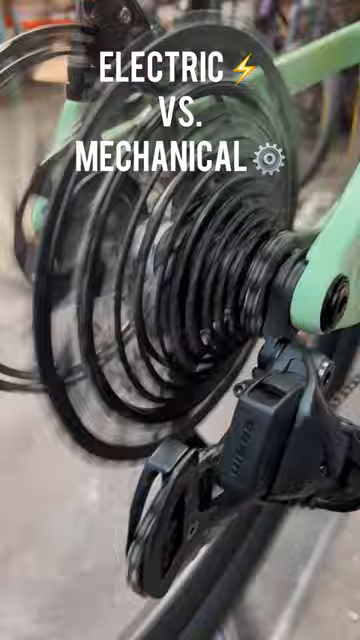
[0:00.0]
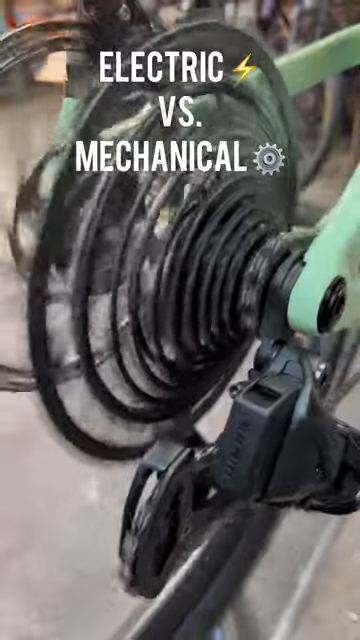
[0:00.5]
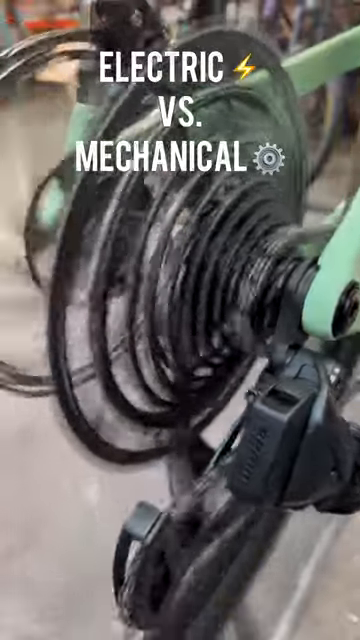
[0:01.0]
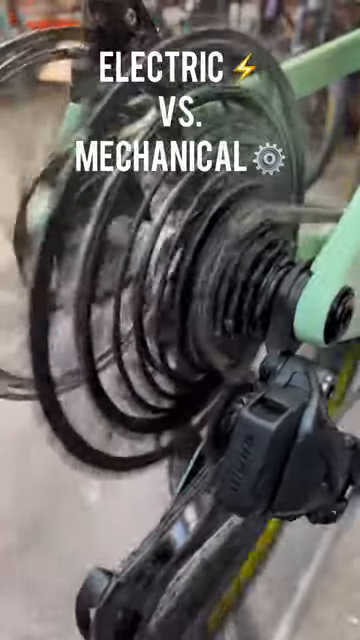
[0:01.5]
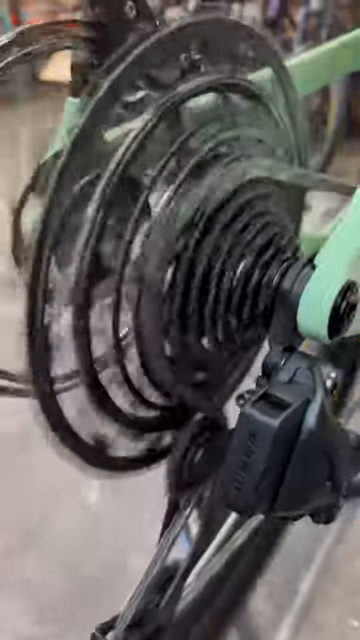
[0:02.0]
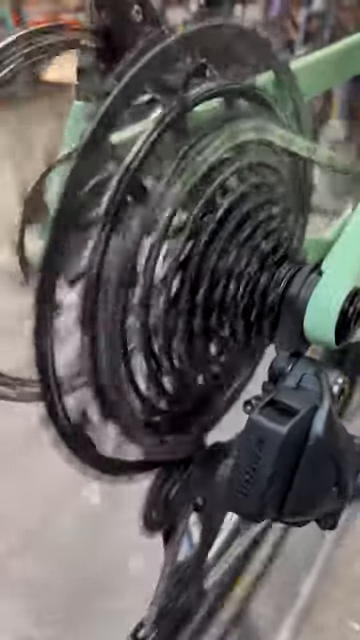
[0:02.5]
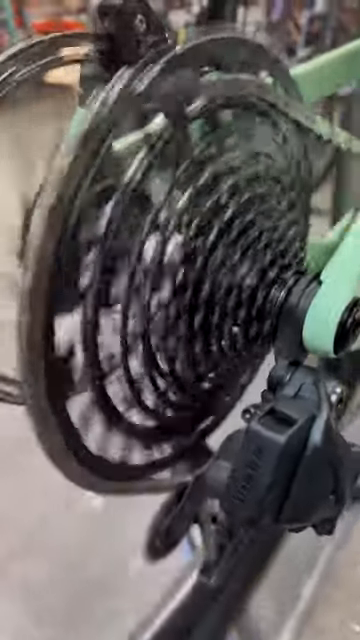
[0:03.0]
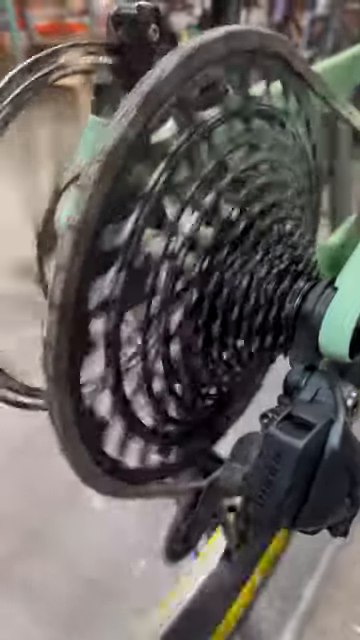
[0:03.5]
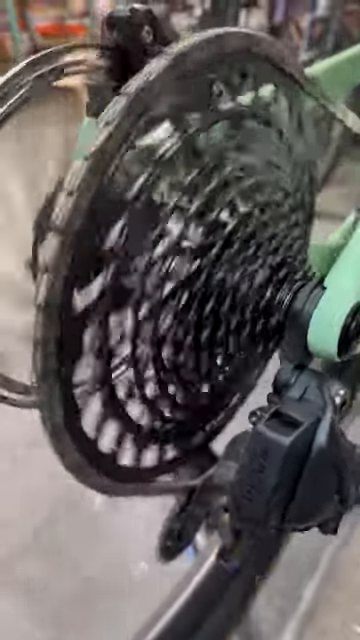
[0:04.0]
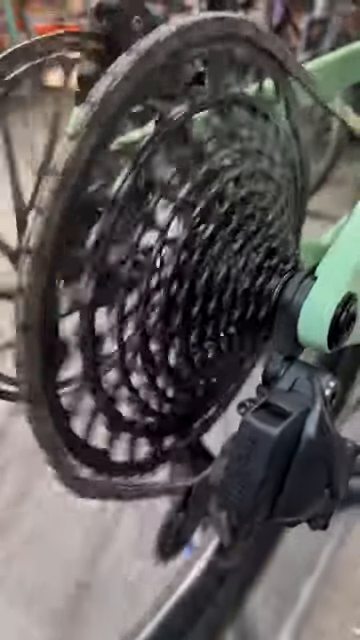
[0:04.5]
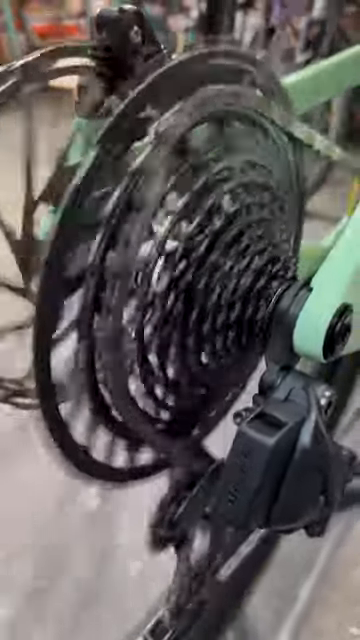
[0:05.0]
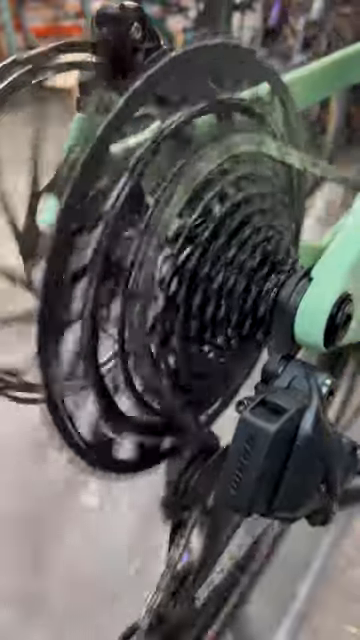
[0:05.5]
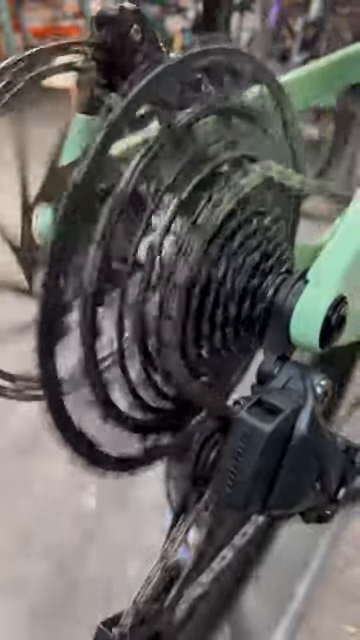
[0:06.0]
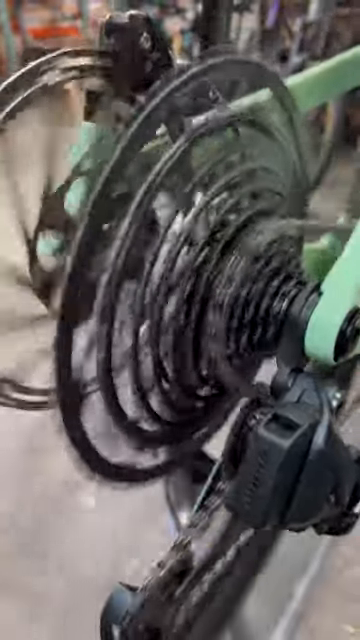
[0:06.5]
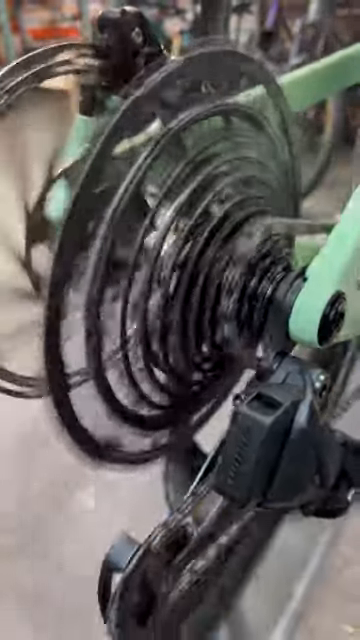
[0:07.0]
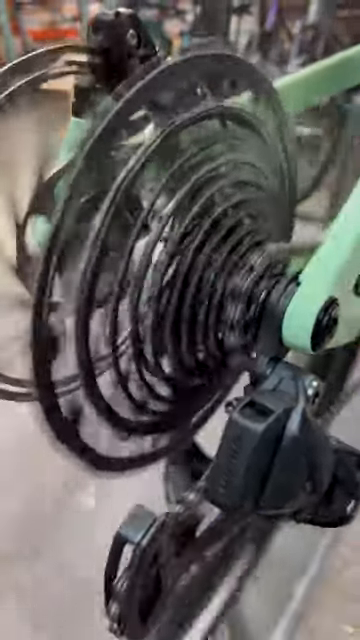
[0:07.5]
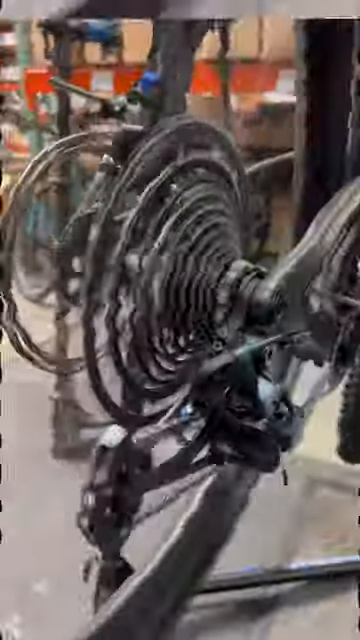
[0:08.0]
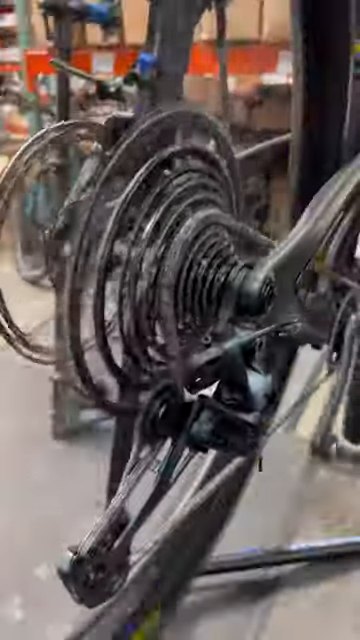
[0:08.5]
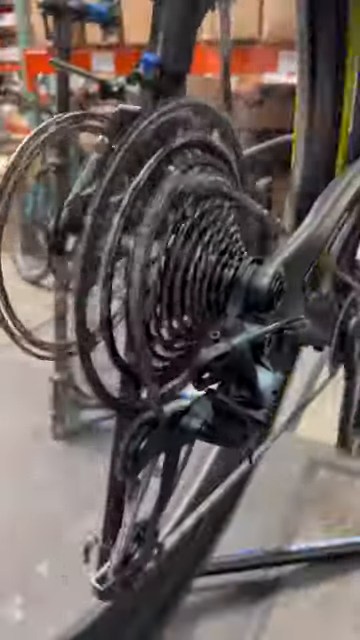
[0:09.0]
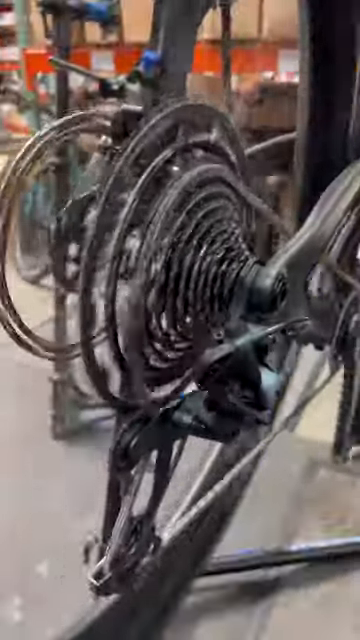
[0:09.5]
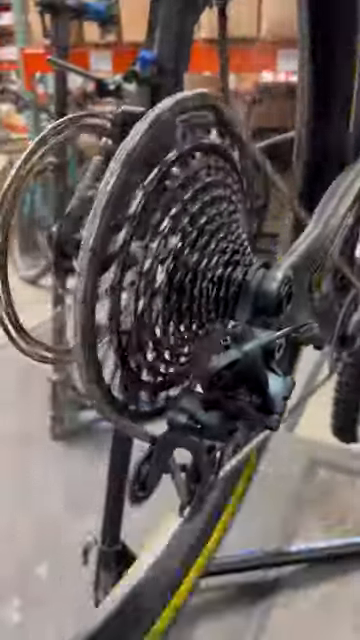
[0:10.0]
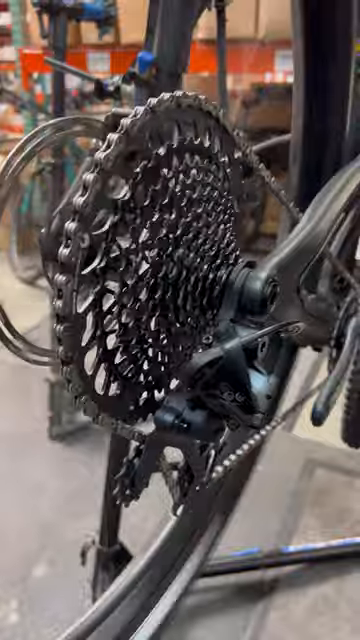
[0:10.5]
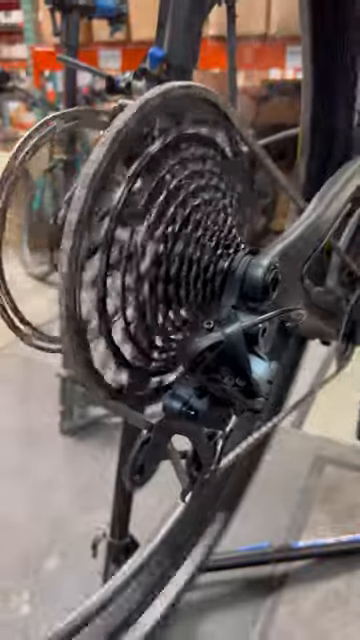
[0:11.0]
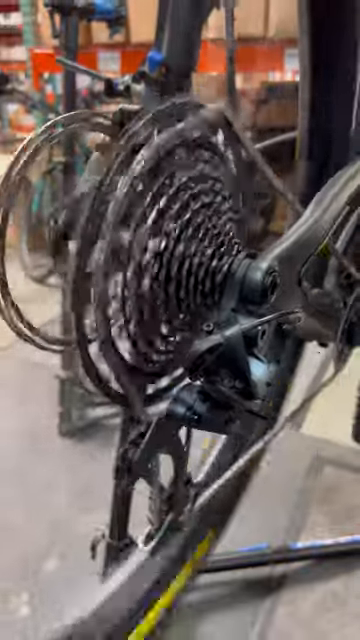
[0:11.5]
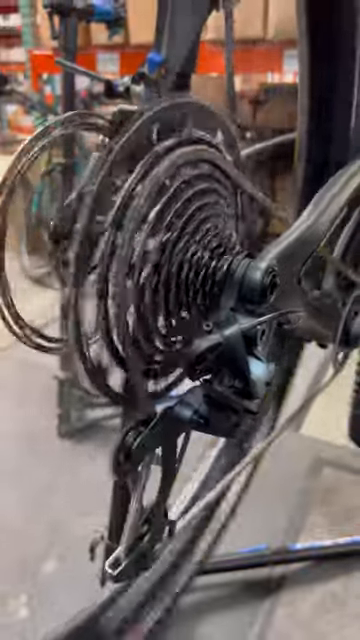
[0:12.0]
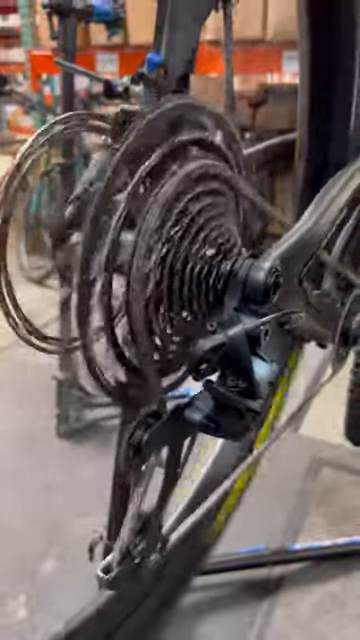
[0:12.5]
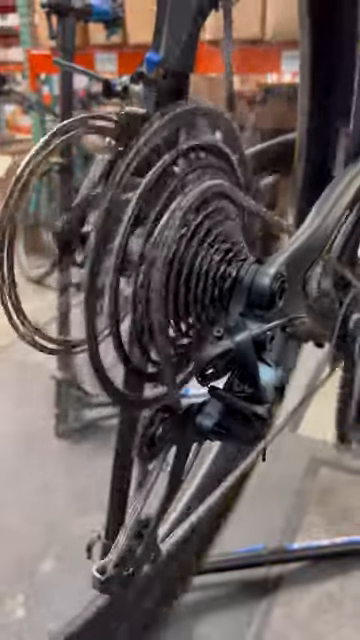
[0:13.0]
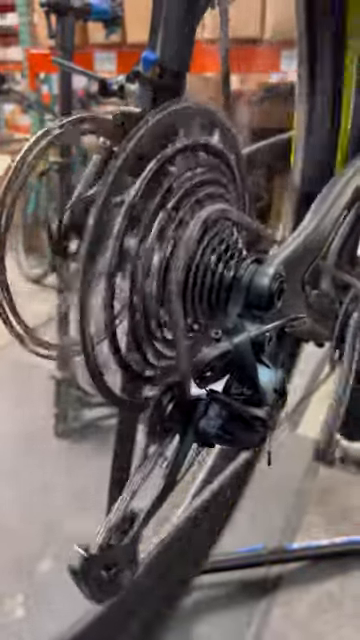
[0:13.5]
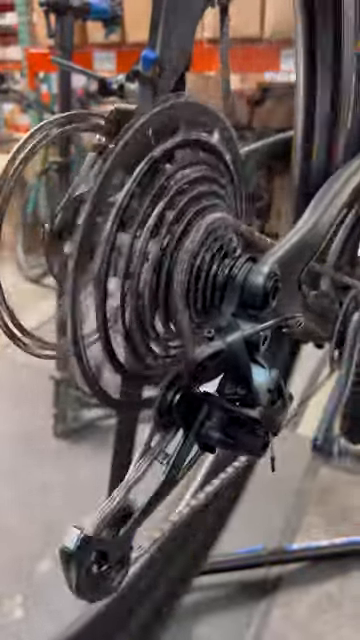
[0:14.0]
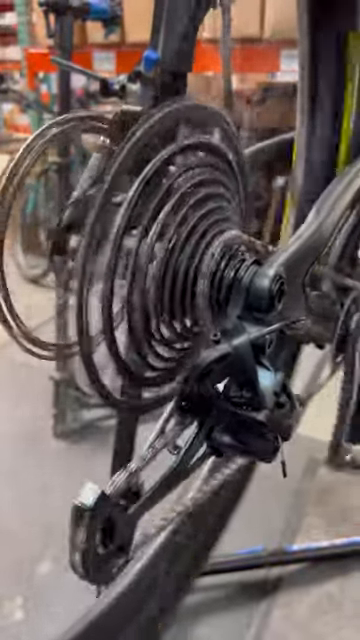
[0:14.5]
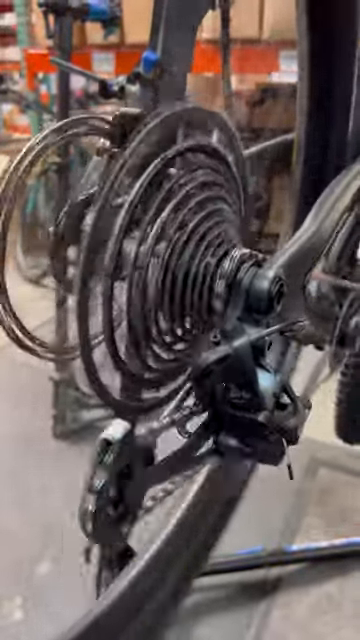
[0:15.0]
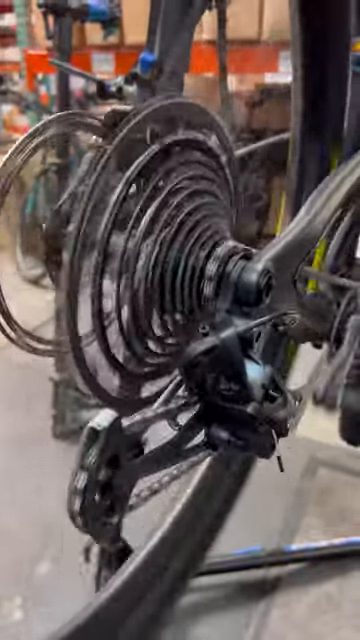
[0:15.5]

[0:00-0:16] The spokes of a bike are visible, but the main focus is the bike's gear shifting, comparing electronic versus mechanical shifting. The first part apparently shows mechanical shifting, with the chain switching gears a little more slowly, seemingly on a regular bike; it is unclear whether the bike is electric or only the gear shifting is. The second bike shifts through the gears much faster. The video shows the difference between mechanical and electric gear shifting.